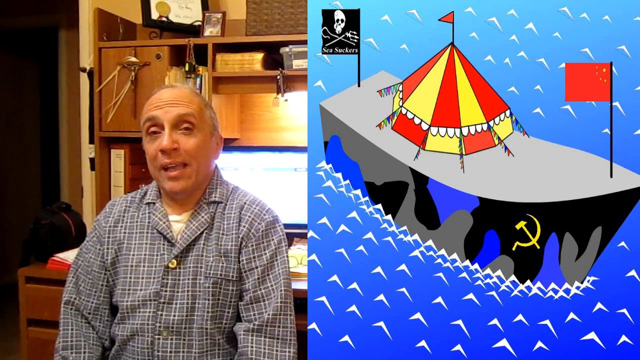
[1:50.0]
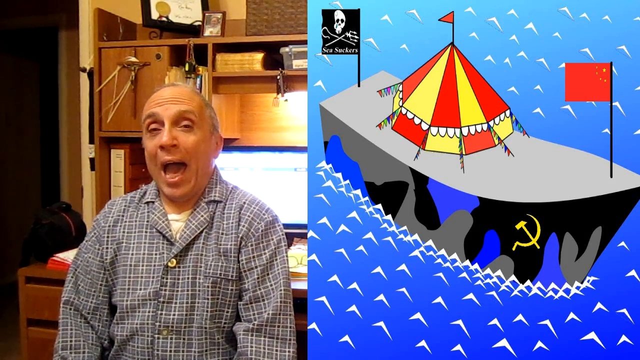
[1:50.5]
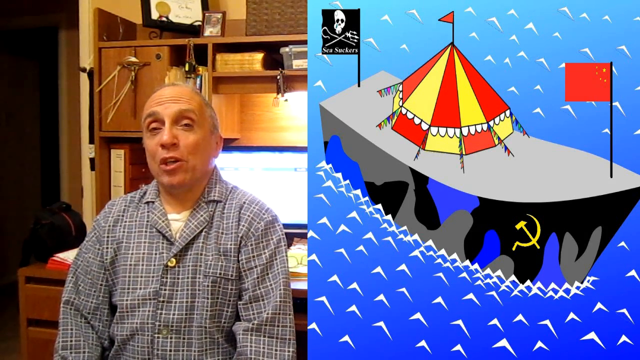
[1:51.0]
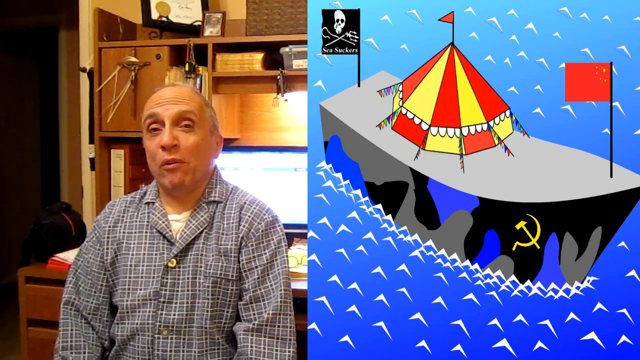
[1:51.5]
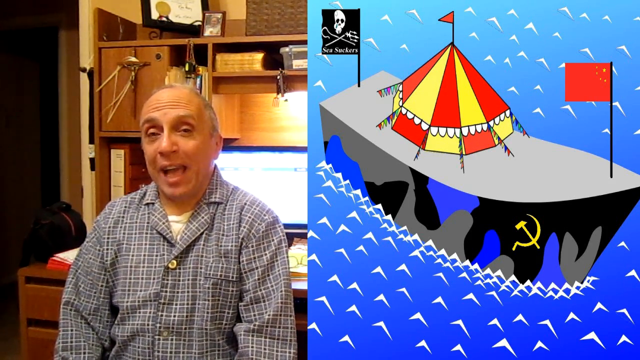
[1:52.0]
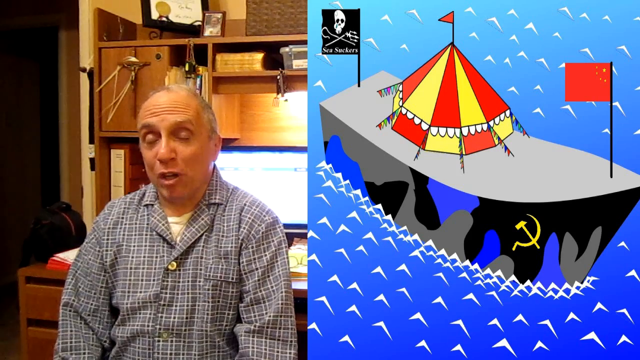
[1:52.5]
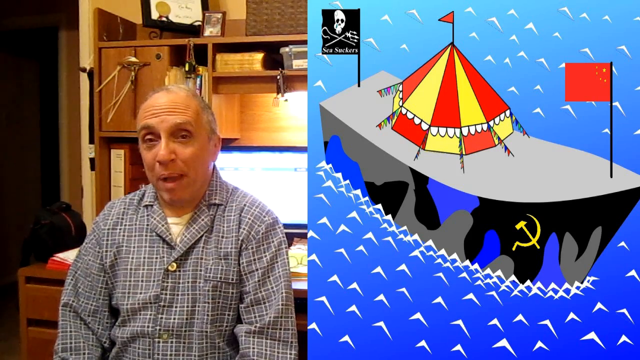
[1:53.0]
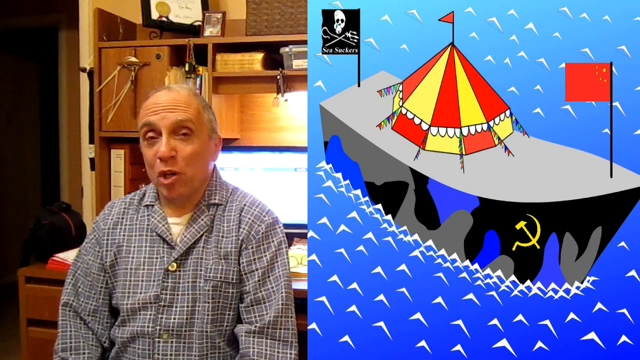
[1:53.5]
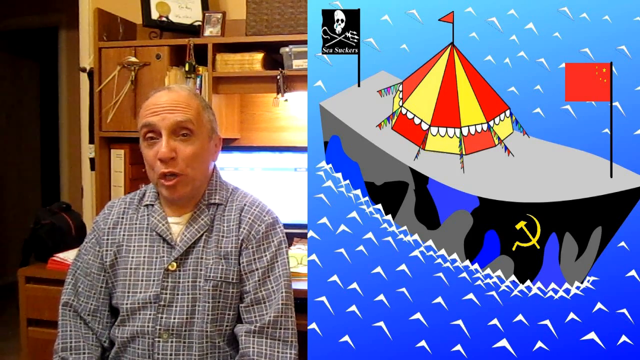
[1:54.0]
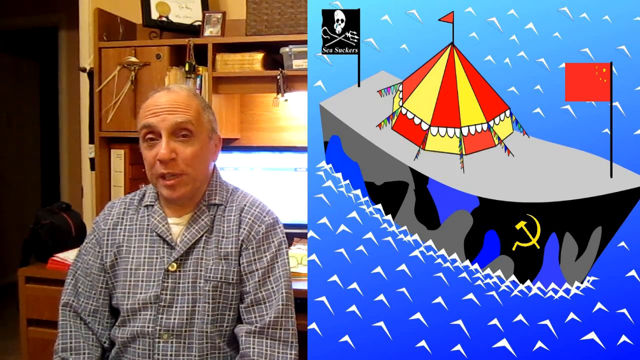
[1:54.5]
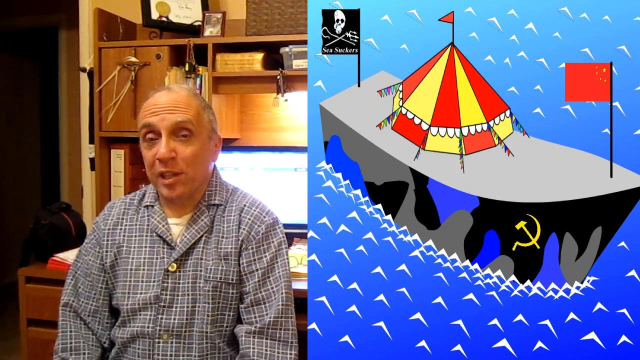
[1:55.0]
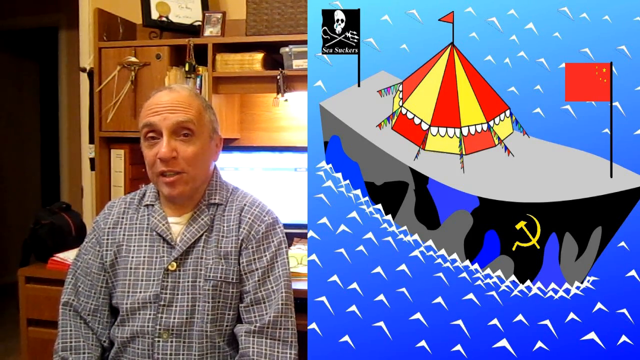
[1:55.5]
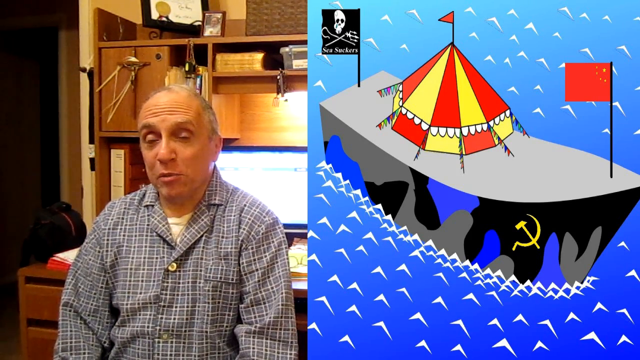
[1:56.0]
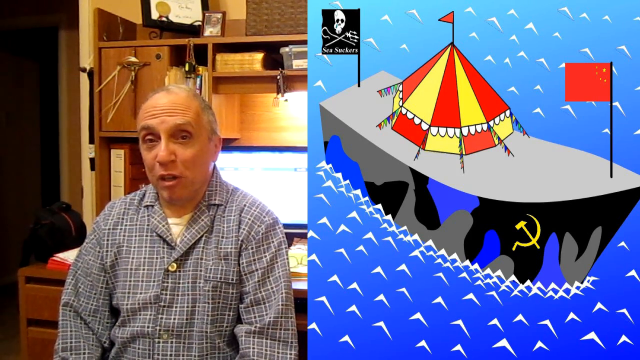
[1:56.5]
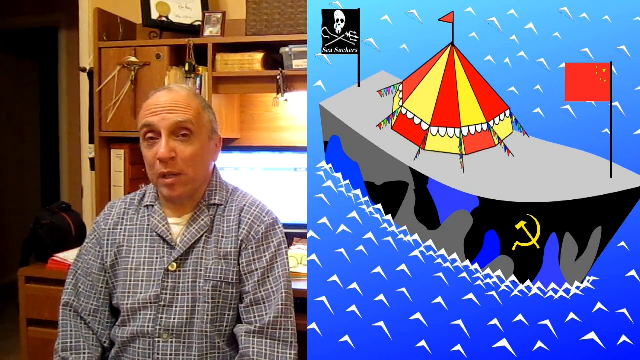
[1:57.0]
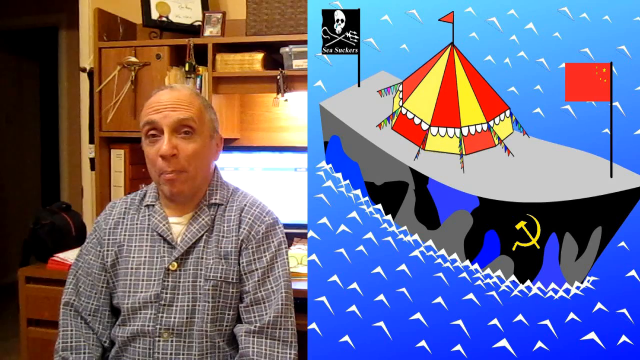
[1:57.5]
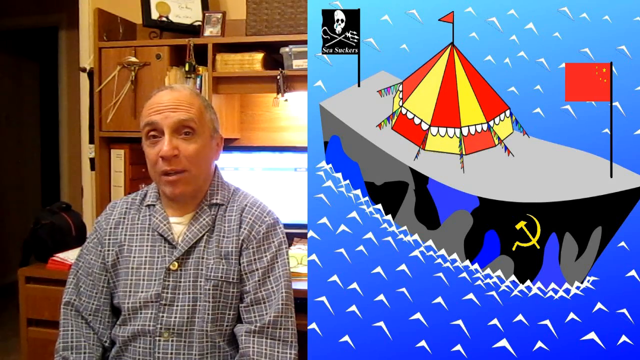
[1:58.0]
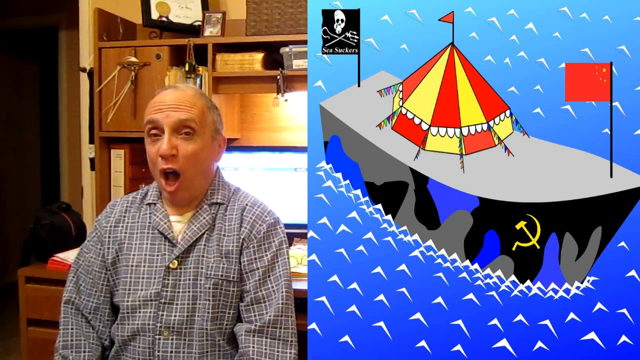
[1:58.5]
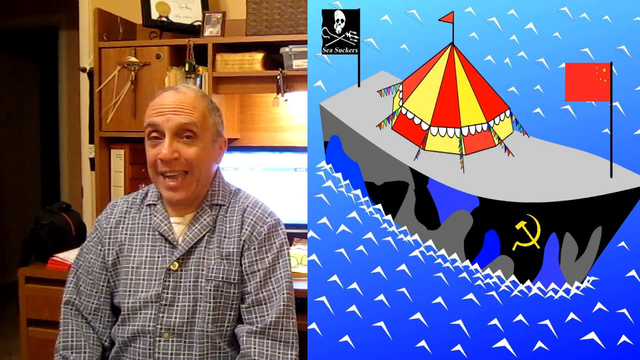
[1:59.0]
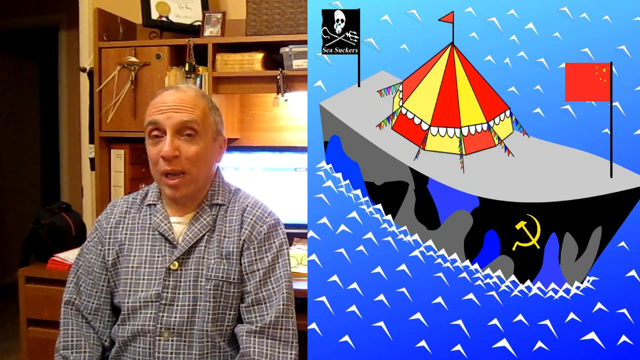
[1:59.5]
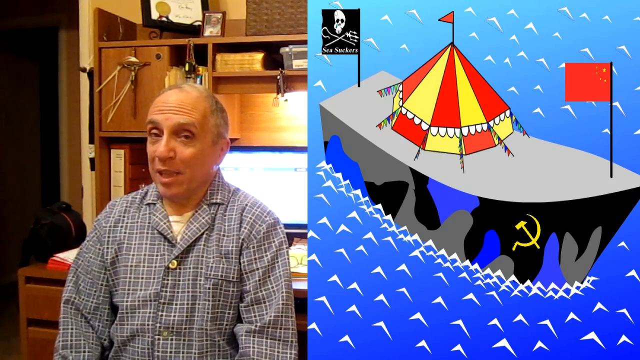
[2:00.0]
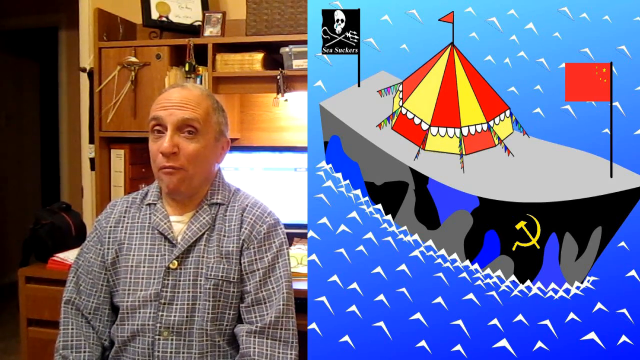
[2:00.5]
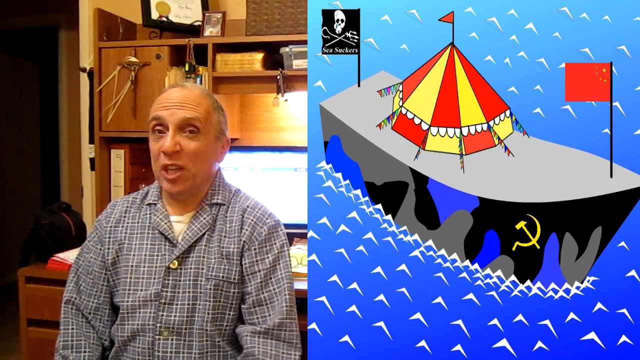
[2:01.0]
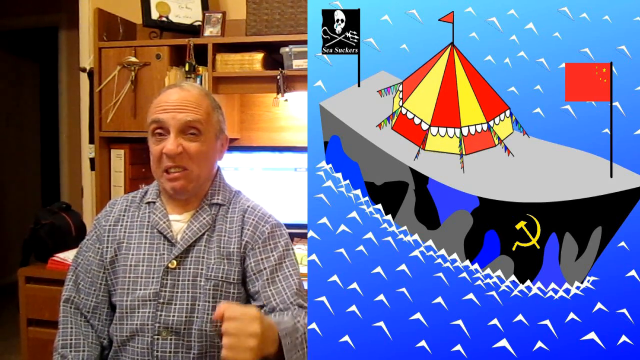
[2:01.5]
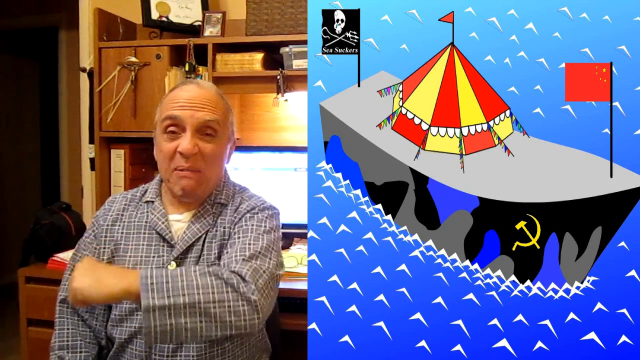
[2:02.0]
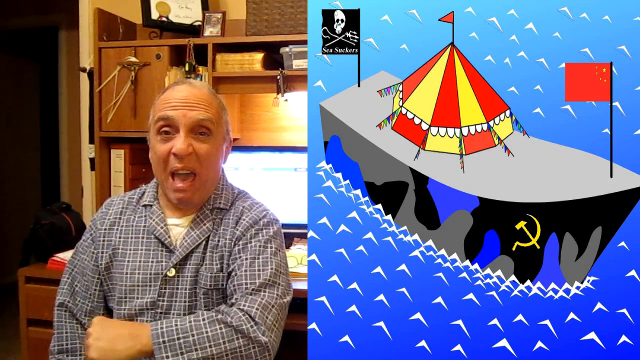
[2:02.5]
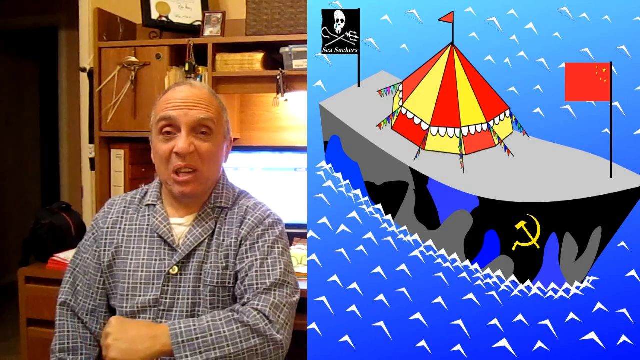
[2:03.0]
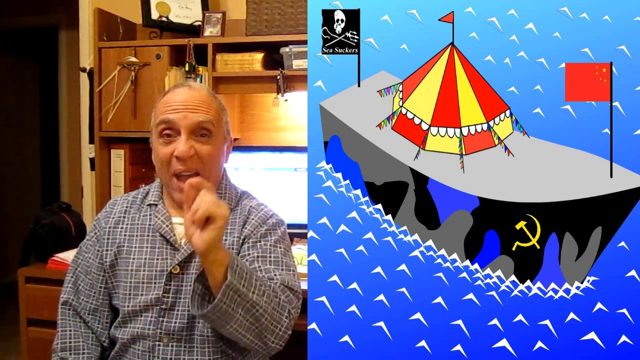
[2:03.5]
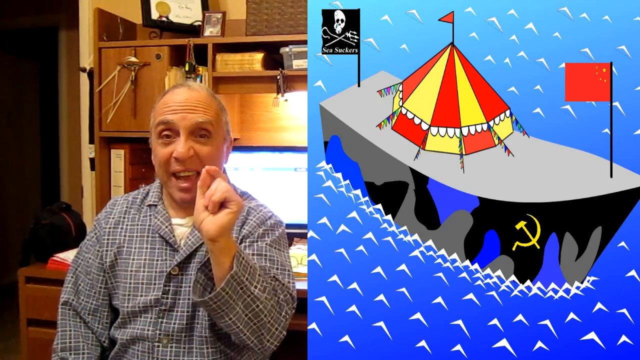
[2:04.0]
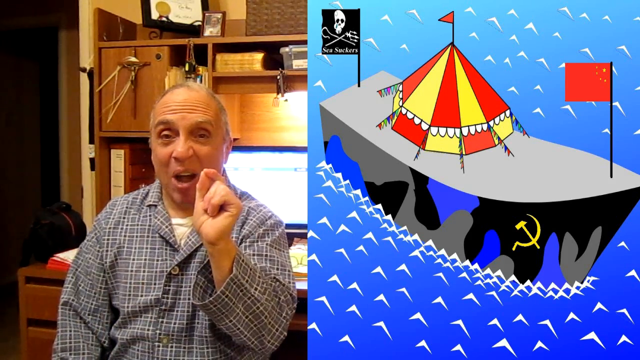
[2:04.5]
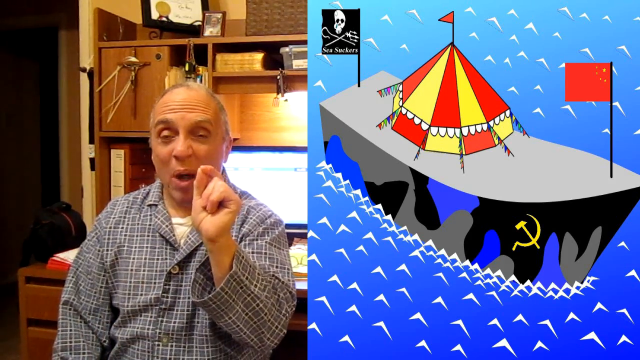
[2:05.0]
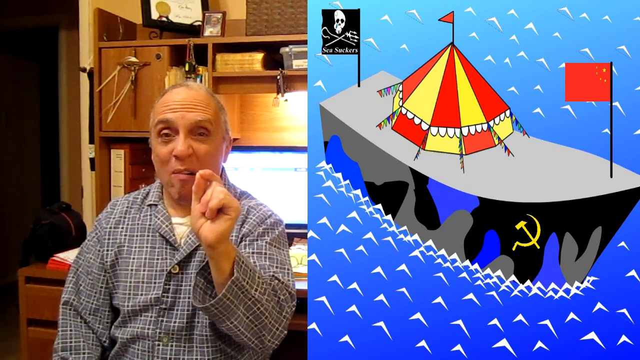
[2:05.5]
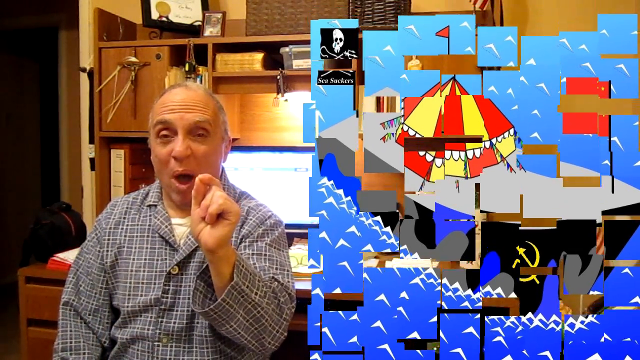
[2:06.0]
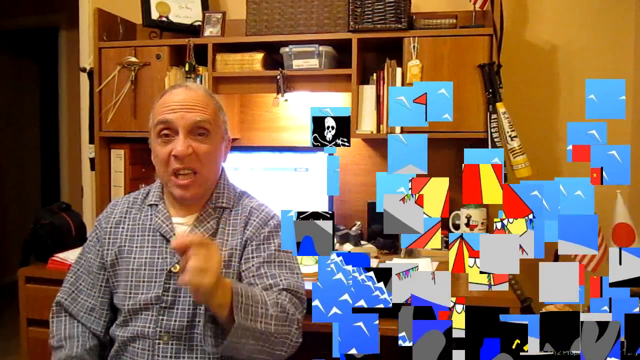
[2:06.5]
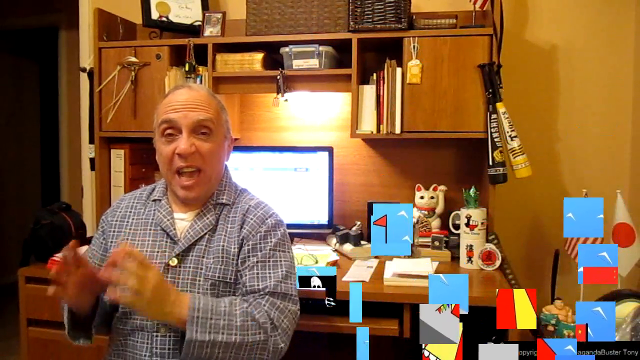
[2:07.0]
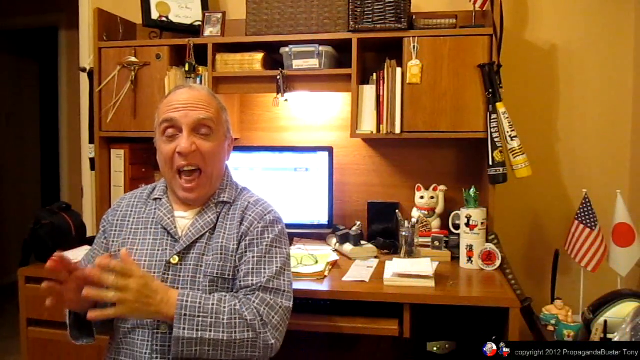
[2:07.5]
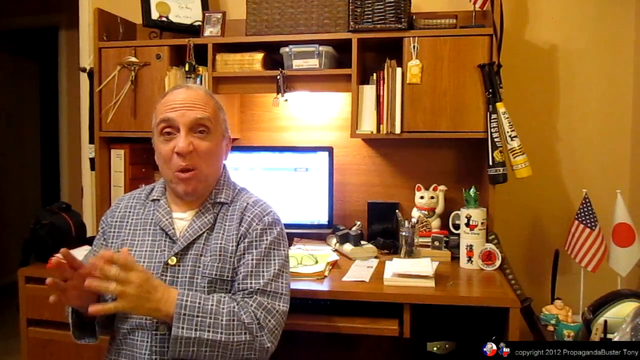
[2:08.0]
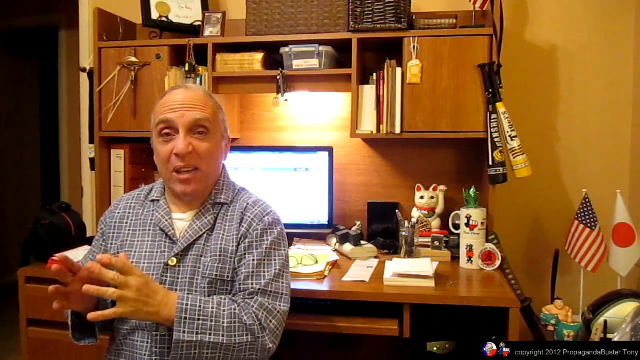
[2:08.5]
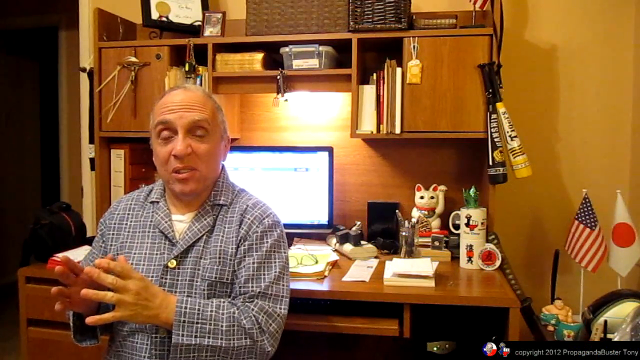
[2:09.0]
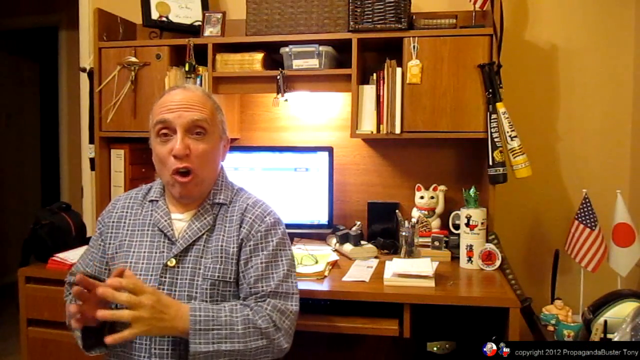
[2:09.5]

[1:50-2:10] The man keeps talking while the boat stays in frame, with the communist flag, a black skull-and-crossbones flag, a kind of circus tent on top with a little red flag, and a yellow communist symbol. The whole animation then breaks away into what look almost like puzzle pieces leaving the screen, and the man returns to being the main focus in his office, with his desk and all the original background details present. He continues talking very energetically, making fist bump motions, hand motions and general gestures to emphasize what he is saying.